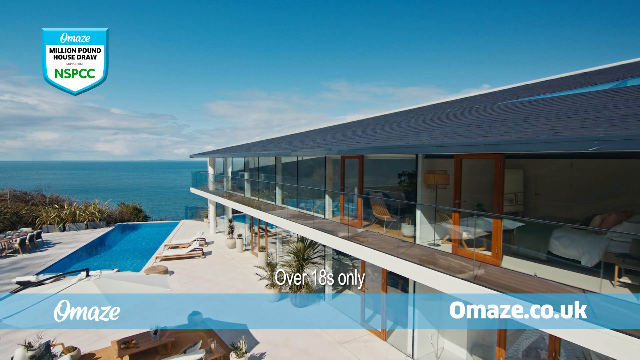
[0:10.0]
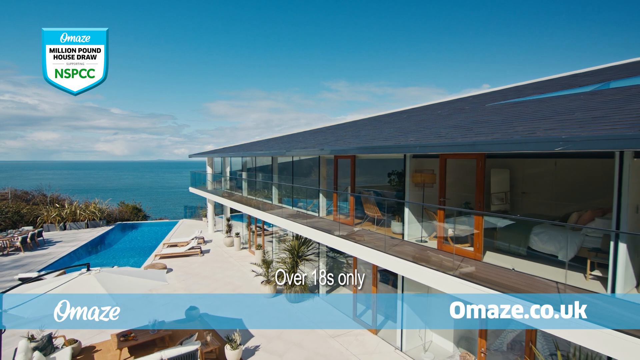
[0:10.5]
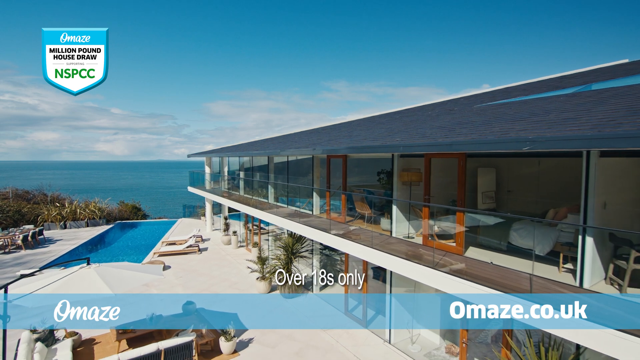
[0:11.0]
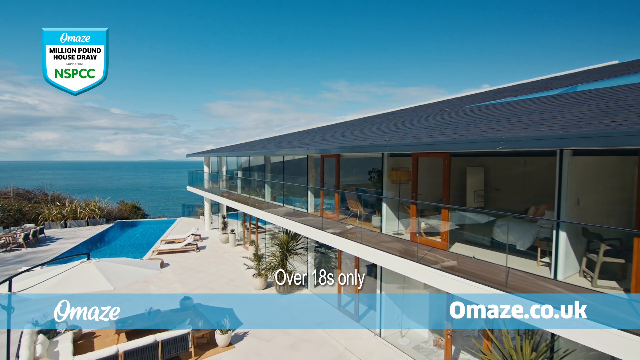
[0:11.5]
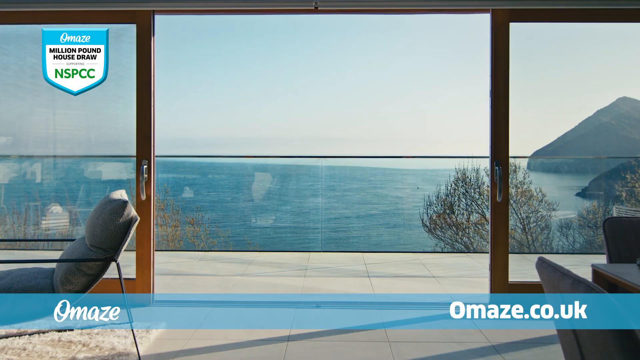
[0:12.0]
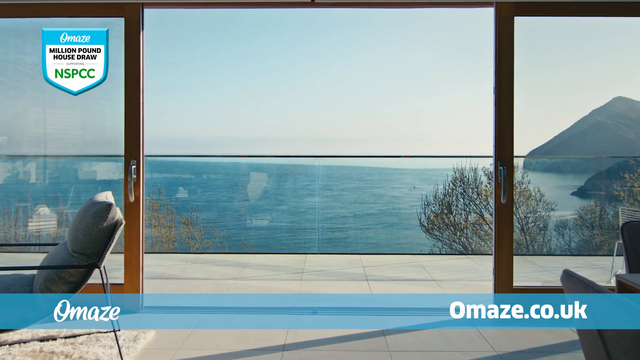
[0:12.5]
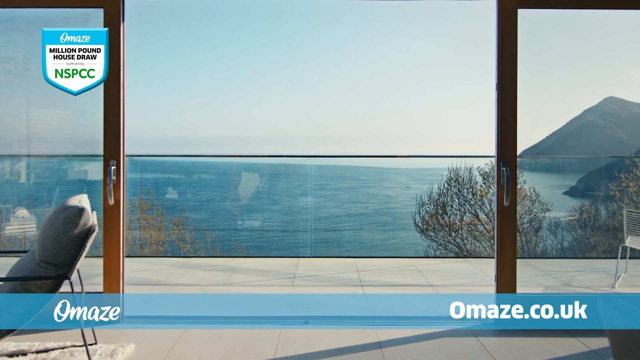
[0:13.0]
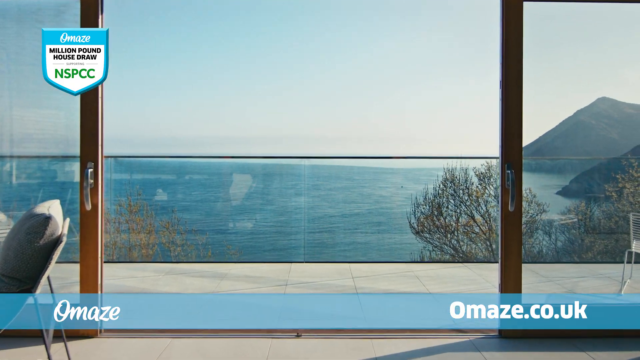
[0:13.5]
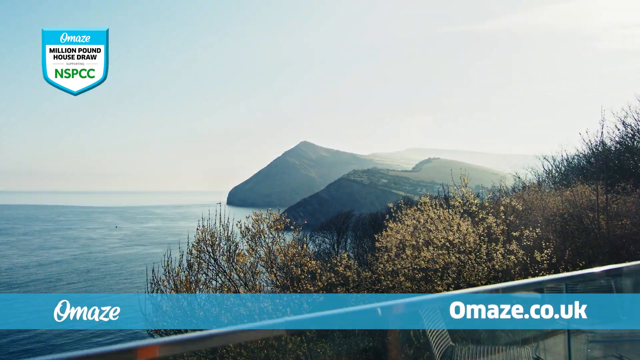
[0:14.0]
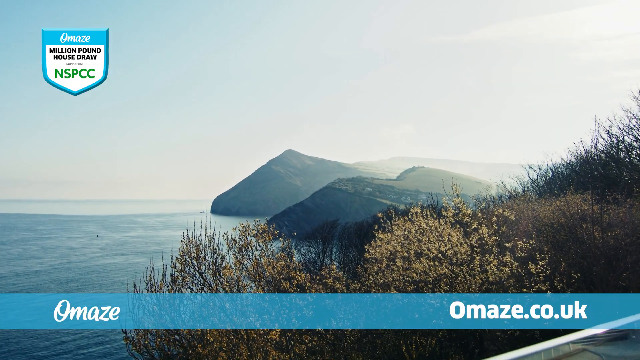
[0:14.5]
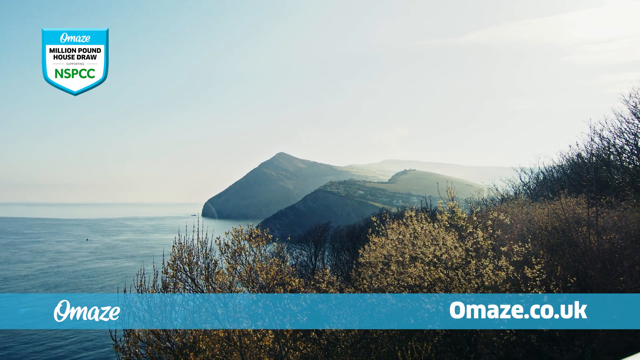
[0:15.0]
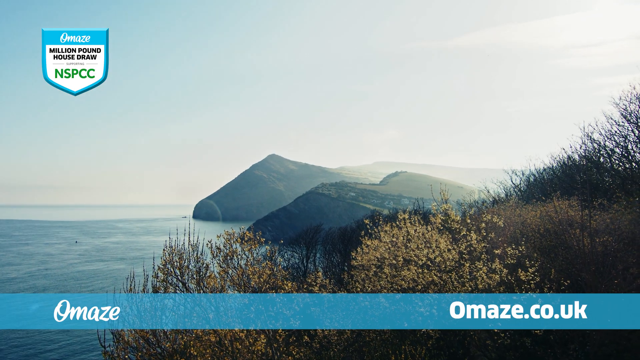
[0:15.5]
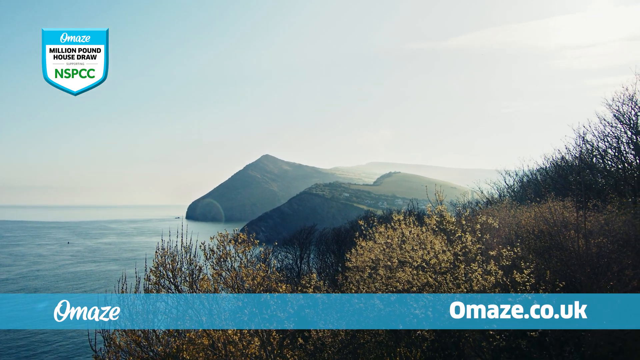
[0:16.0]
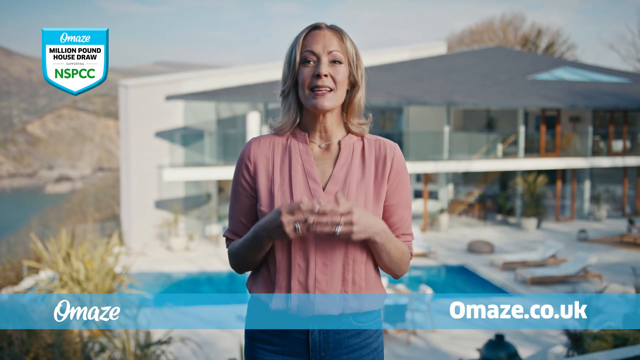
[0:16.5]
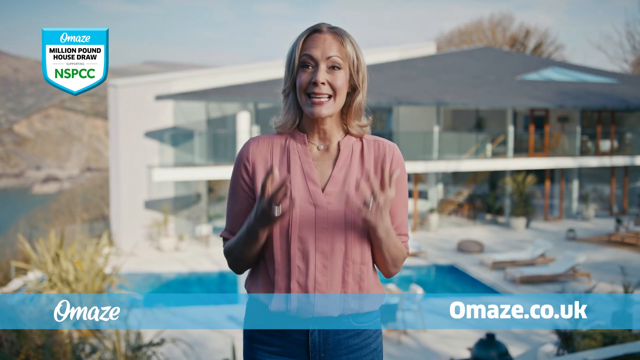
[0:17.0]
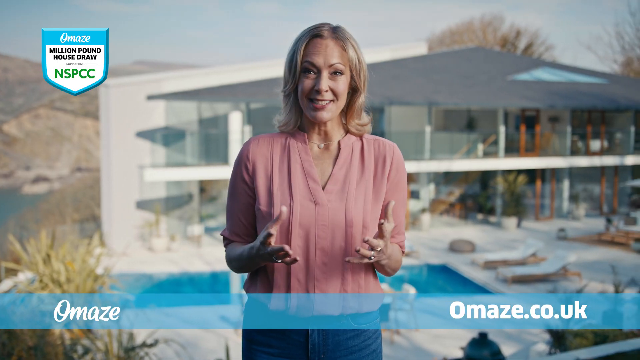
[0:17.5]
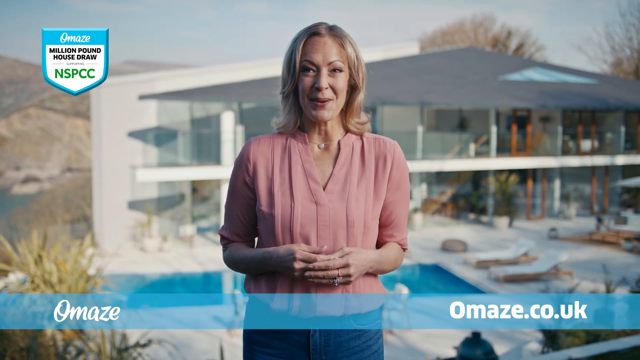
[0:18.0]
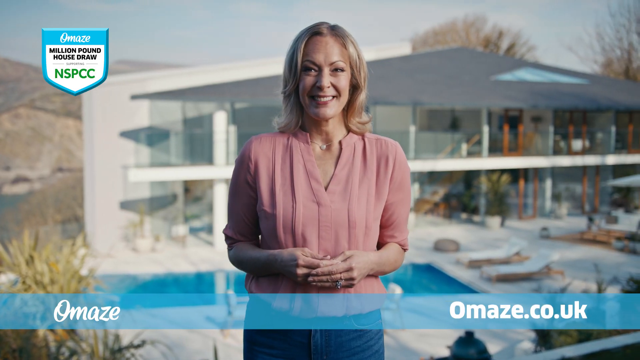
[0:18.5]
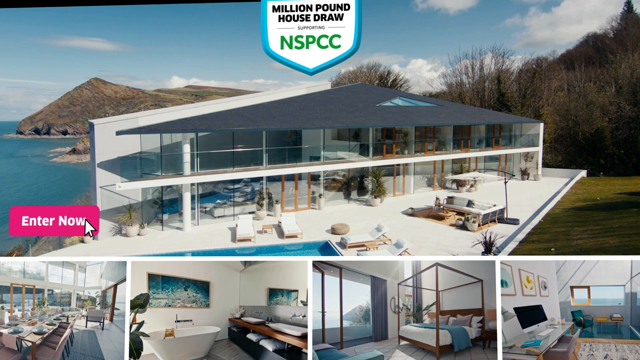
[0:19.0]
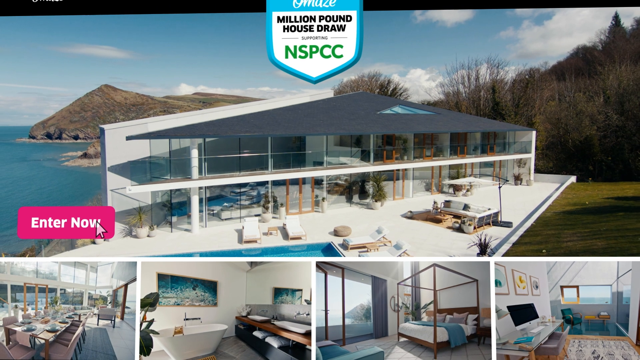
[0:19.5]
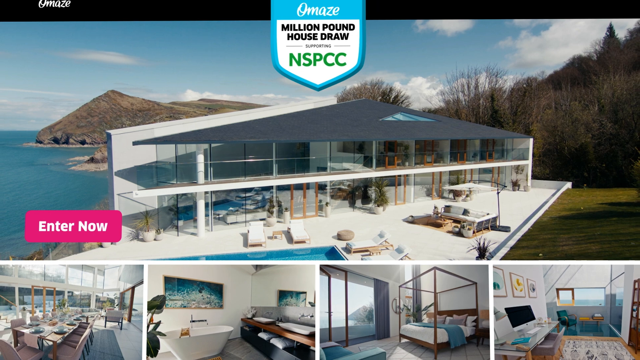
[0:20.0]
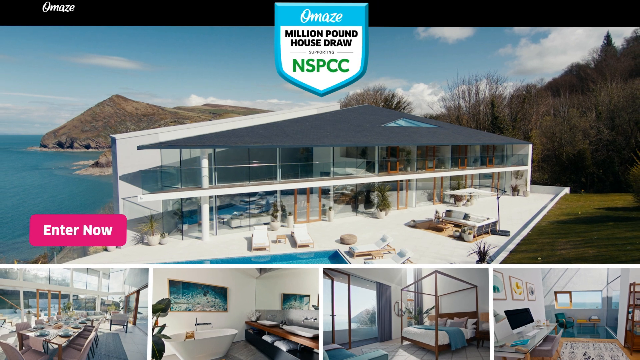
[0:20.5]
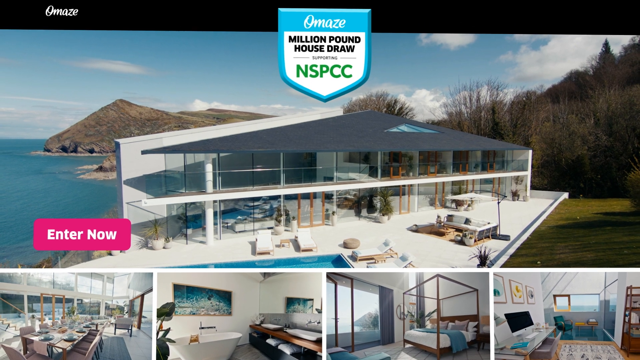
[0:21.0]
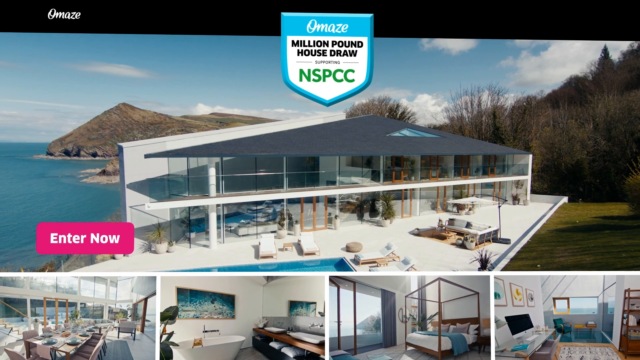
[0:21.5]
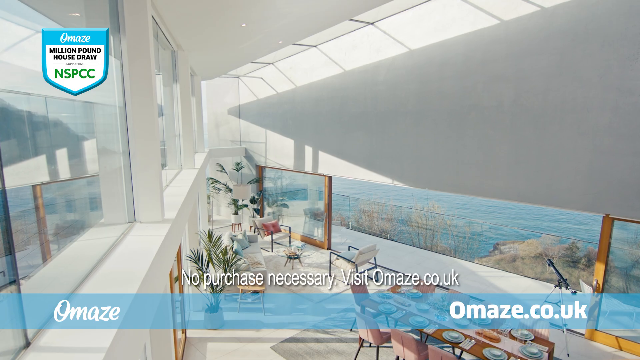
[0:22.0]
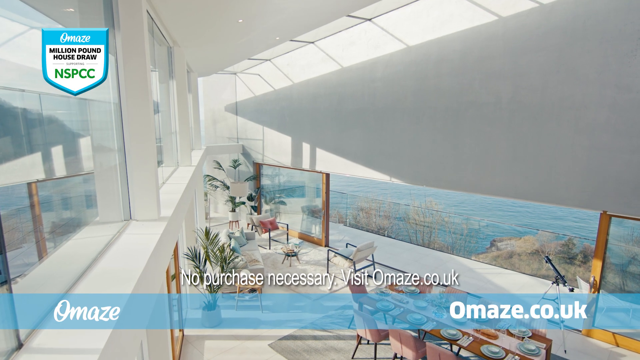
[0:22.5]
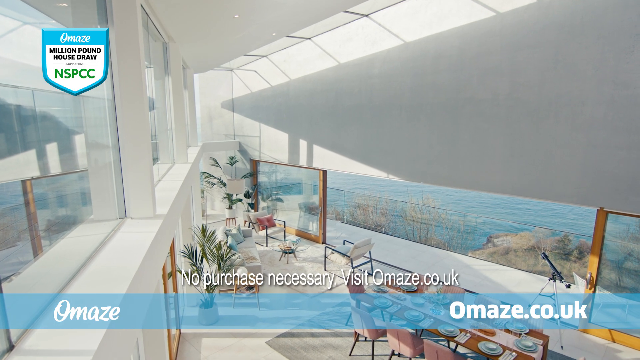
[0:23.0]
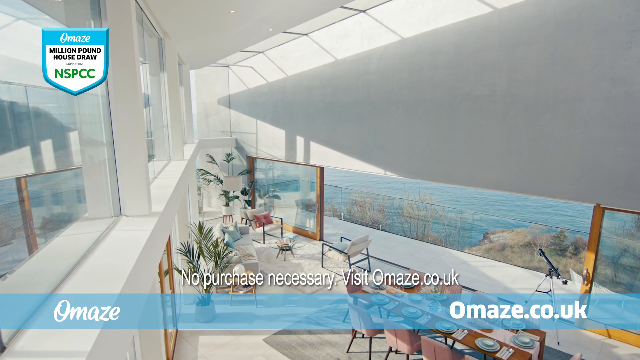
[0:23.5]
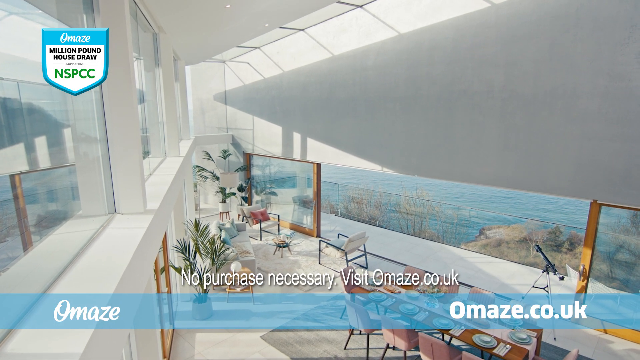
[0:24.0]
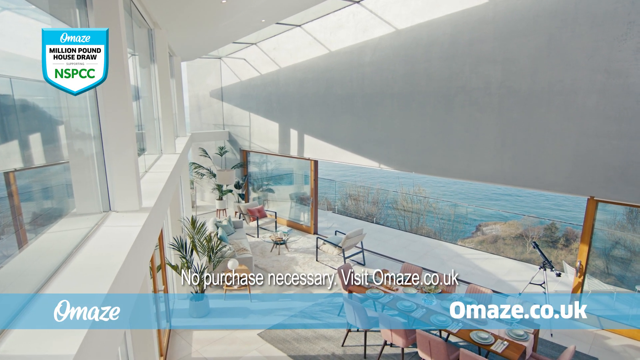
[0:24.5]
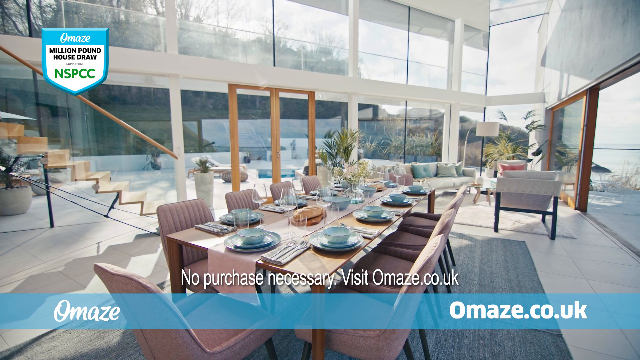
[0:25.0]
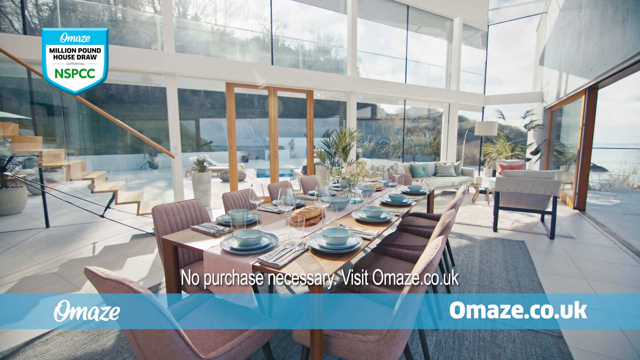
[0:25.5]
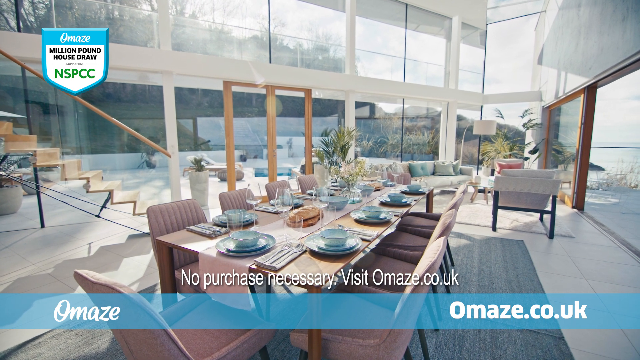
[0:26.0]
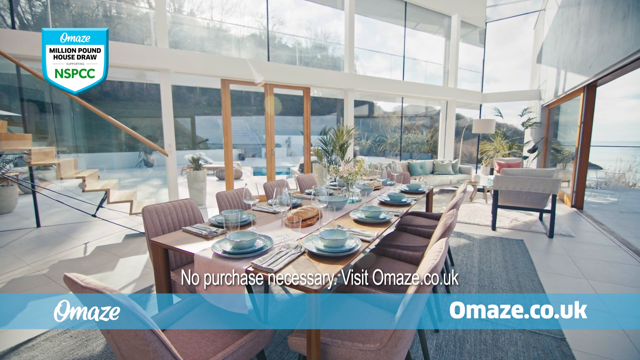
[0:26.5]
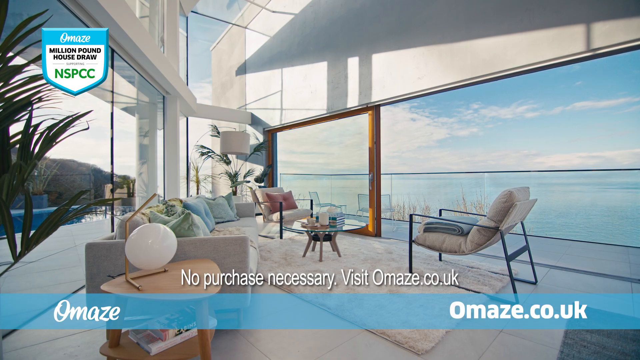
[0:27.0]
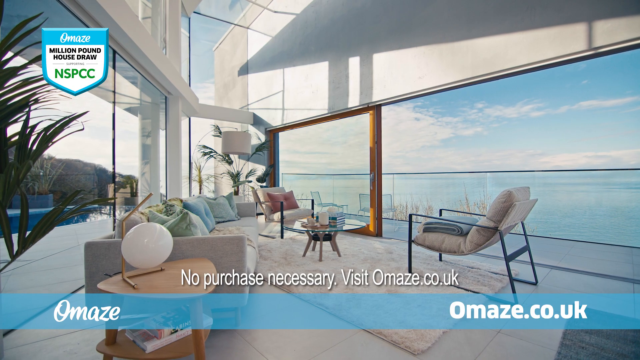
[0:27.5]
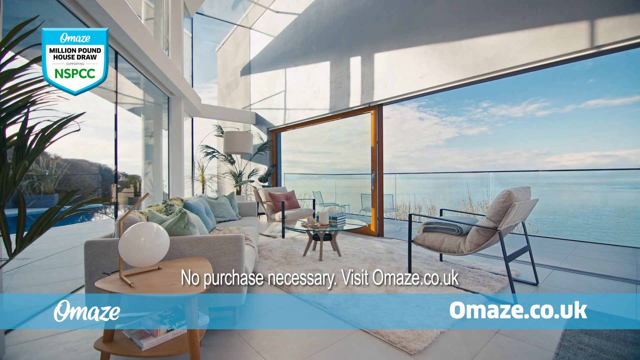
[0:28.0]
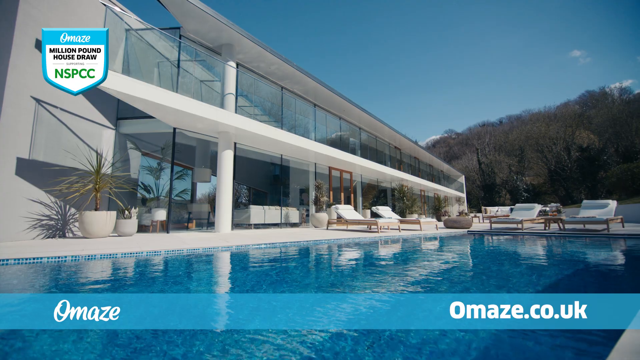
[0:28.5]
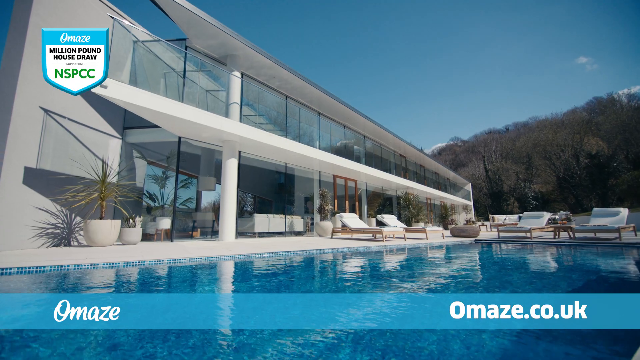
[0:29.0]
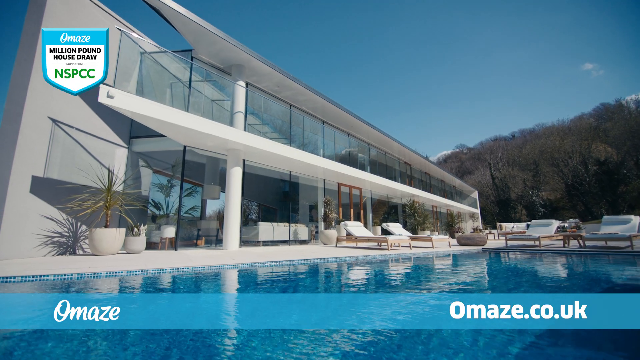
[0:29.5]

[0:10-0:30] A hotel that looks like a five-star hotel overlooks an ocean and big mountains nearby. It is built in white but contains a lot of see-through glass, with a black roof and doors with brown frames around them. It is double-storey, with a bottom part and an upper part. There is a swimming pool with blue water, an area for sunbathing, green natural grass and trees. A woman who appears to be in her early 40s, with long blonde hair and a light complexion, wears a pink top and a ring on her wedding finger; she seems to be talking about the resort. The text "over 18 only" is visible.